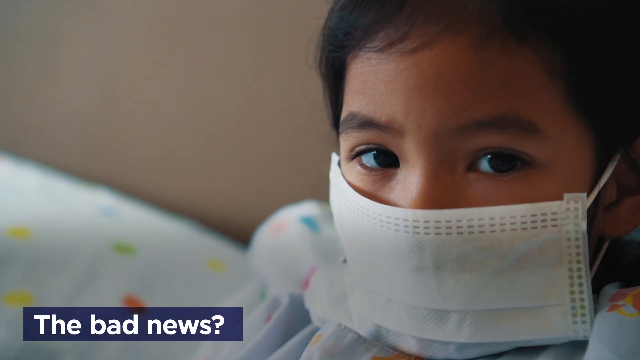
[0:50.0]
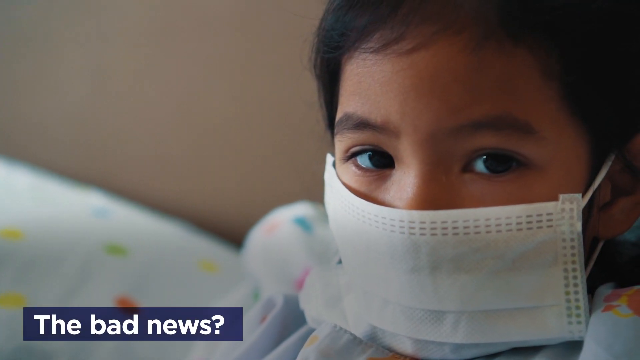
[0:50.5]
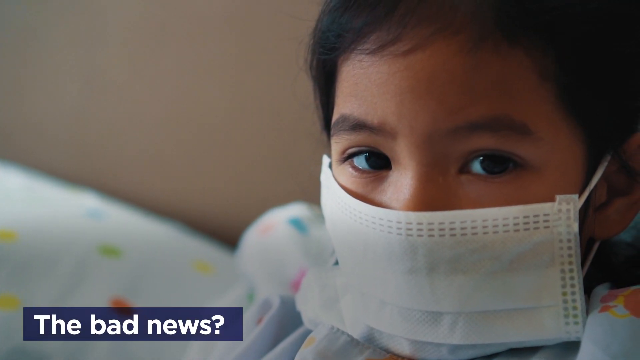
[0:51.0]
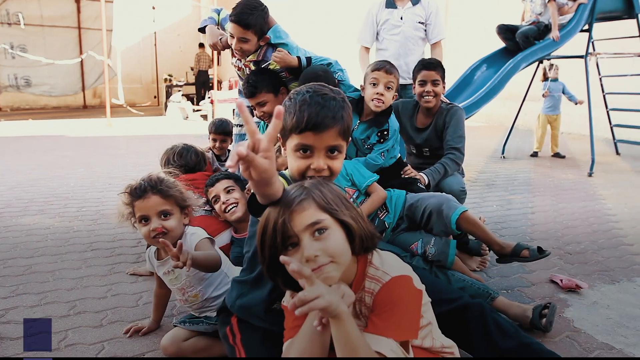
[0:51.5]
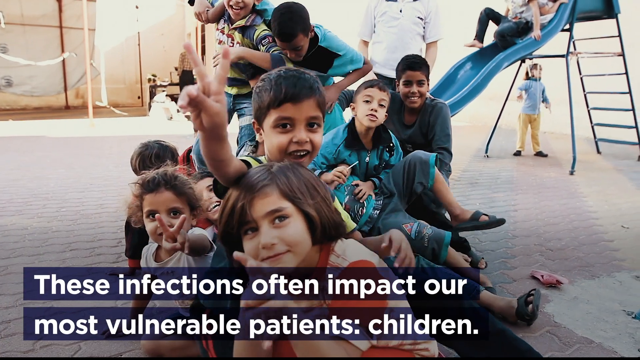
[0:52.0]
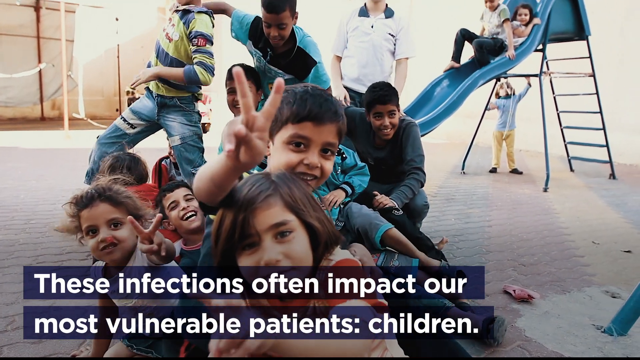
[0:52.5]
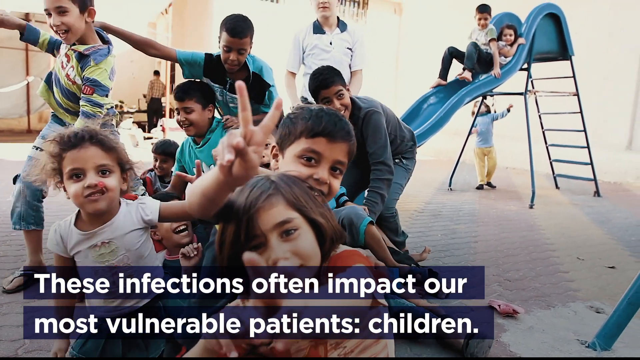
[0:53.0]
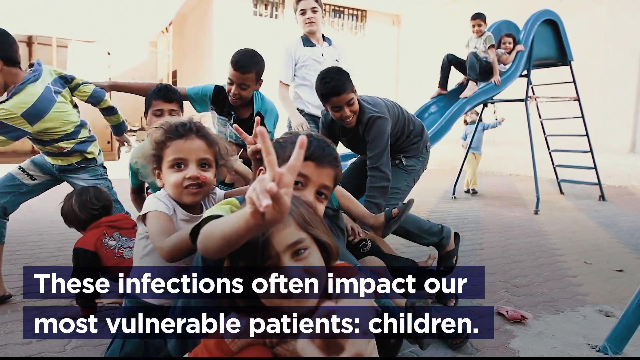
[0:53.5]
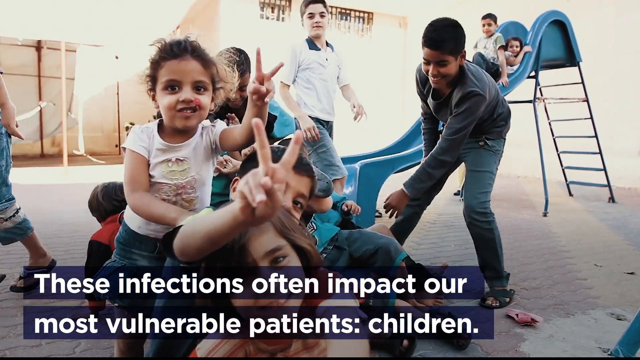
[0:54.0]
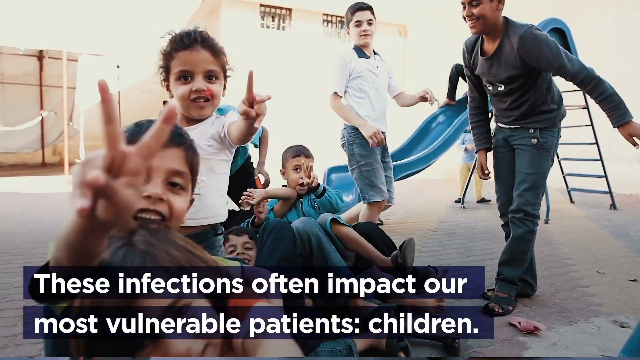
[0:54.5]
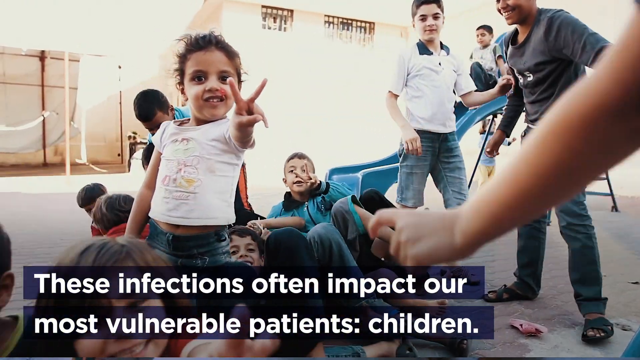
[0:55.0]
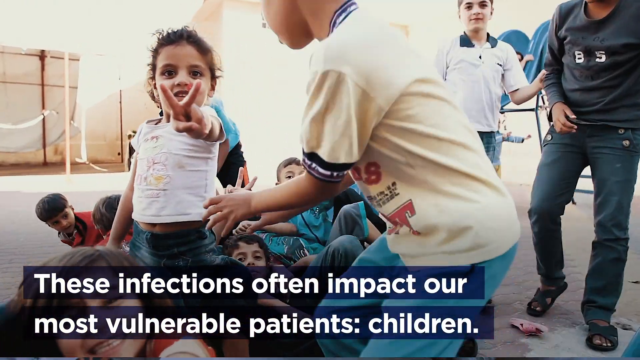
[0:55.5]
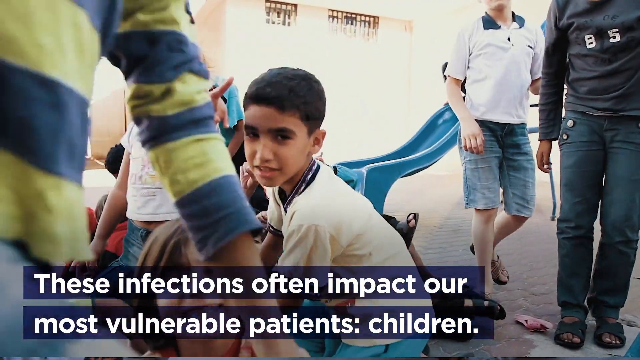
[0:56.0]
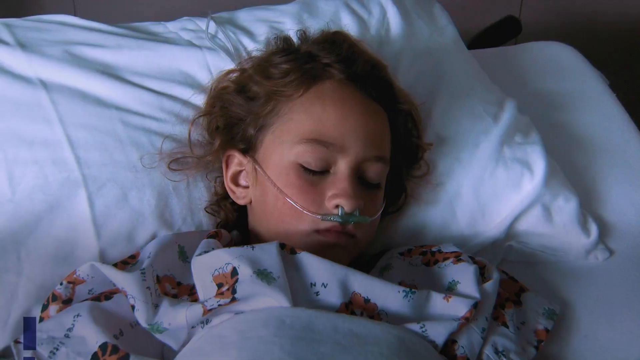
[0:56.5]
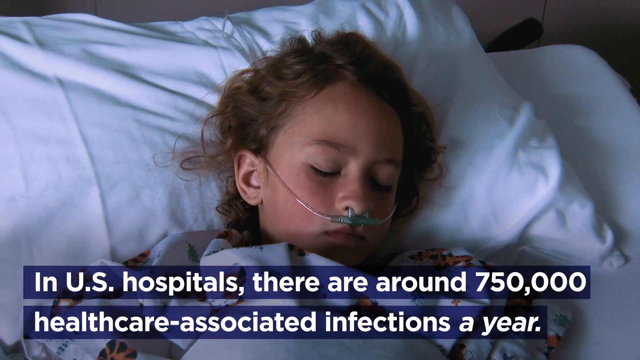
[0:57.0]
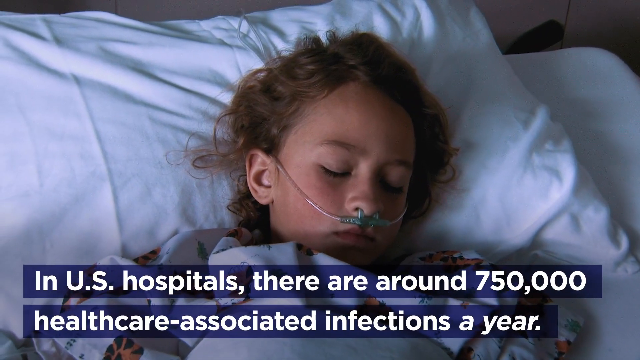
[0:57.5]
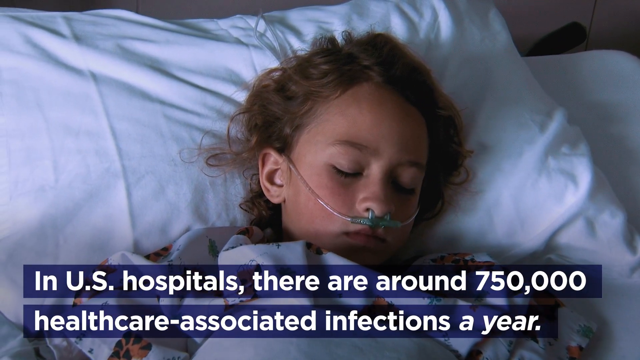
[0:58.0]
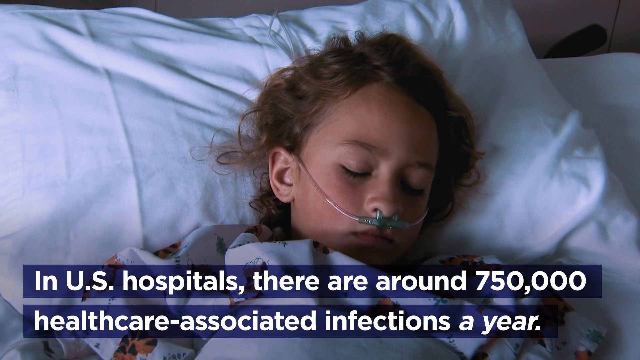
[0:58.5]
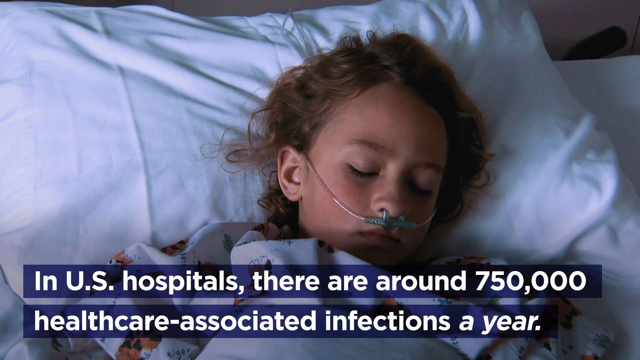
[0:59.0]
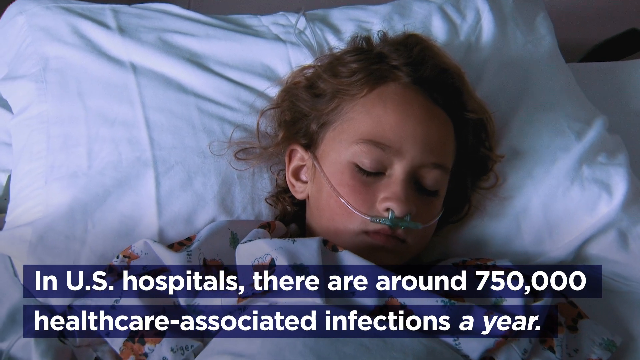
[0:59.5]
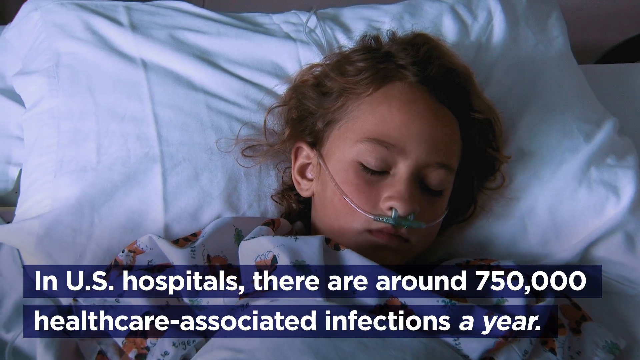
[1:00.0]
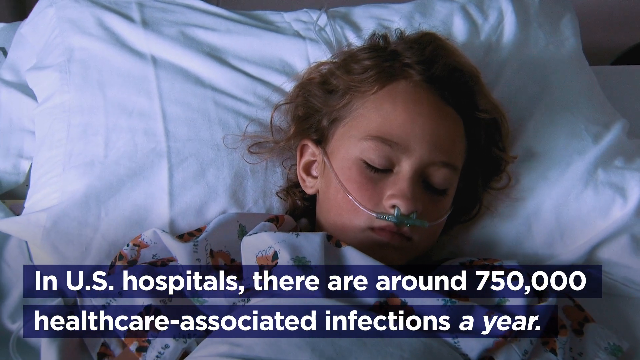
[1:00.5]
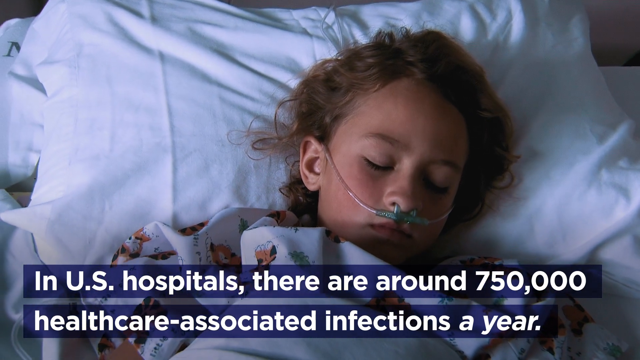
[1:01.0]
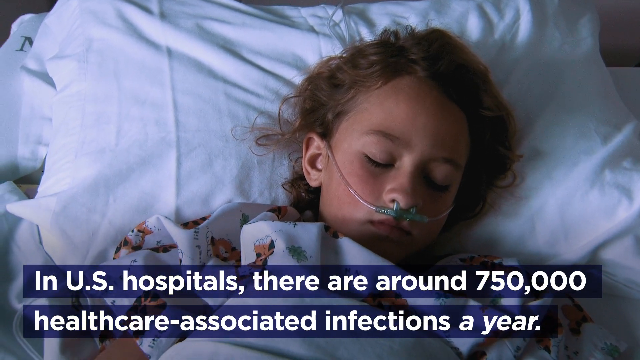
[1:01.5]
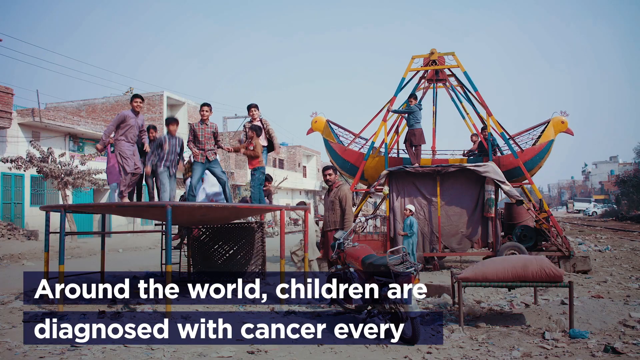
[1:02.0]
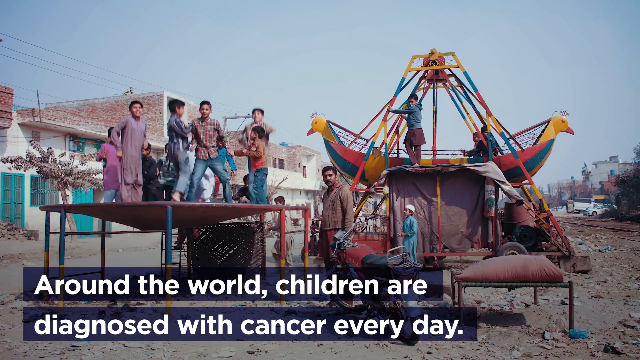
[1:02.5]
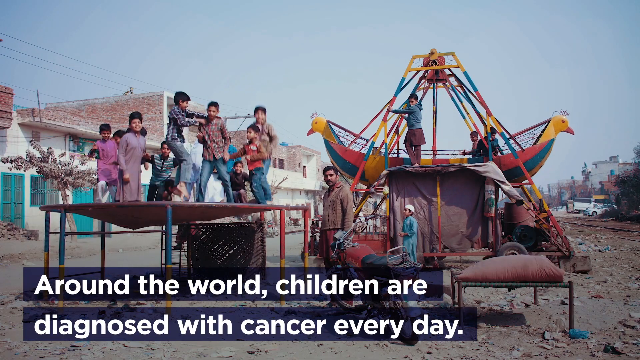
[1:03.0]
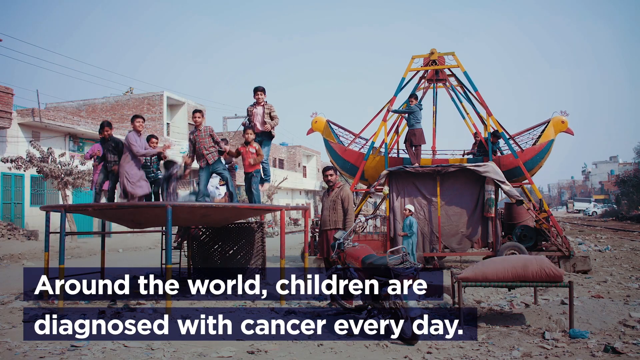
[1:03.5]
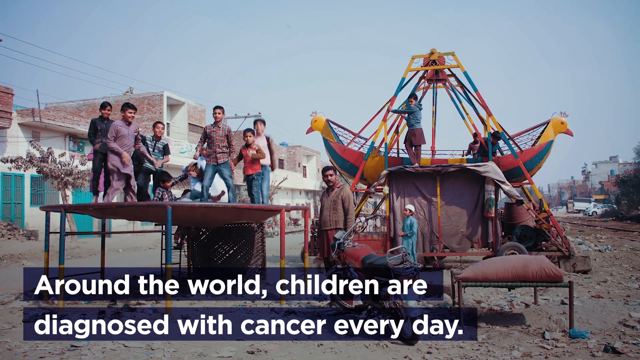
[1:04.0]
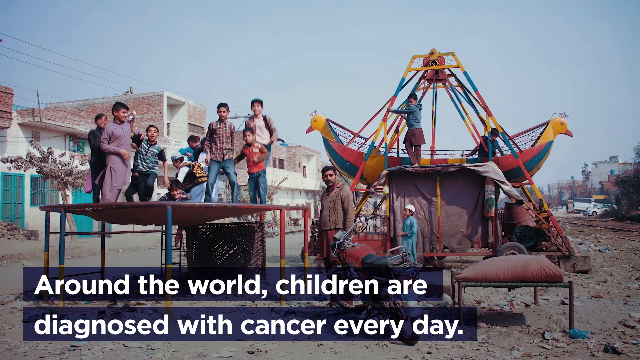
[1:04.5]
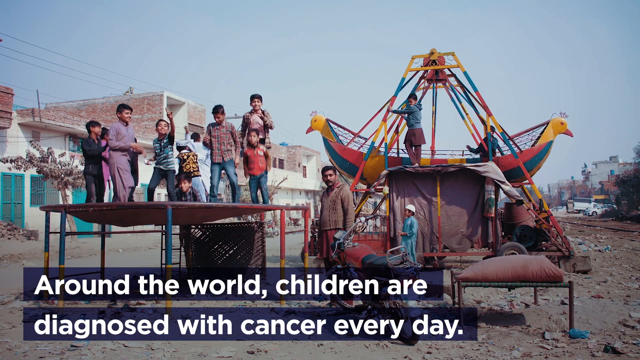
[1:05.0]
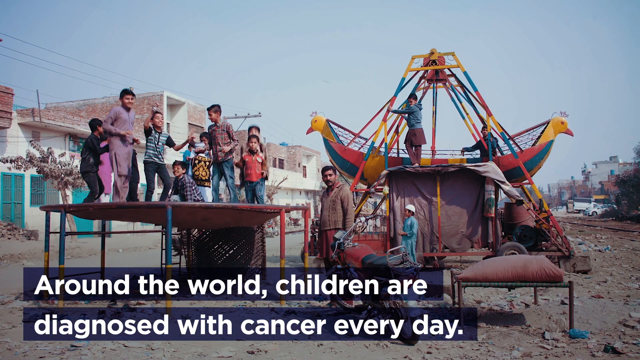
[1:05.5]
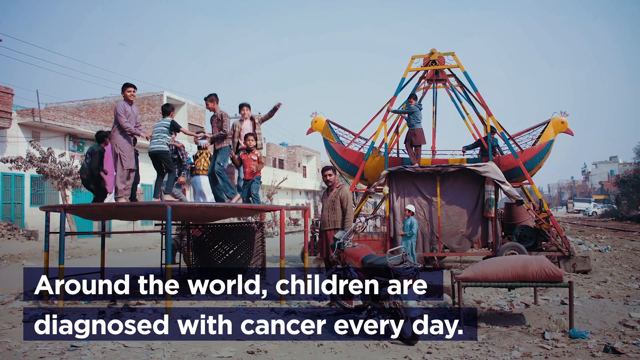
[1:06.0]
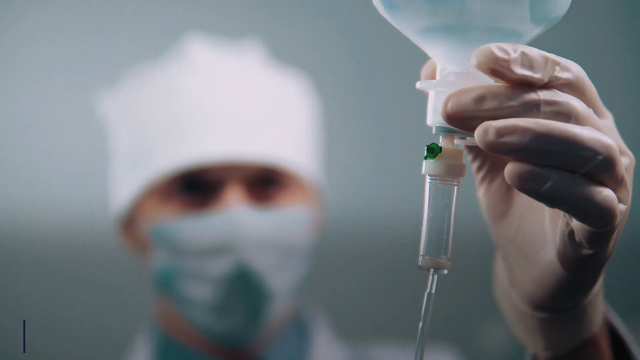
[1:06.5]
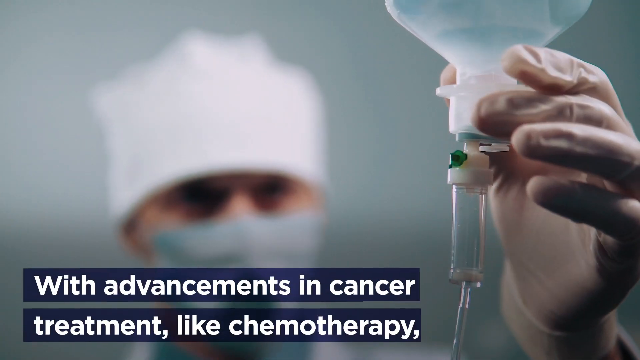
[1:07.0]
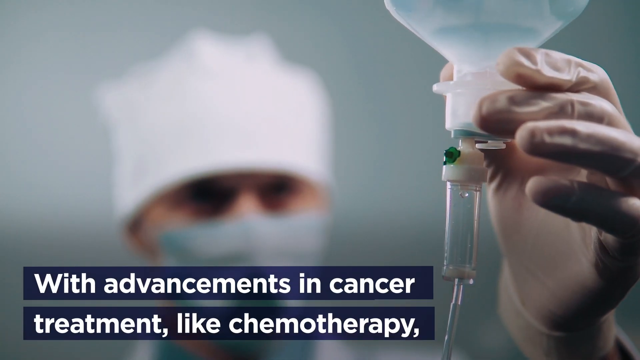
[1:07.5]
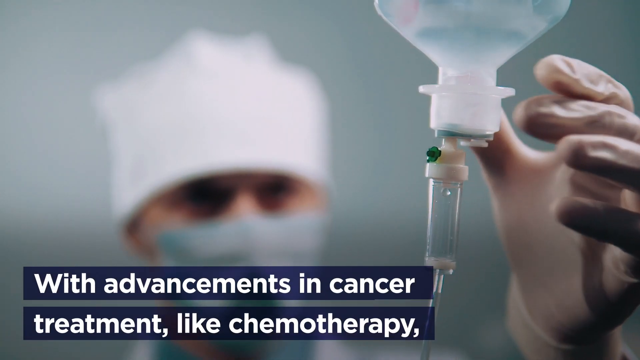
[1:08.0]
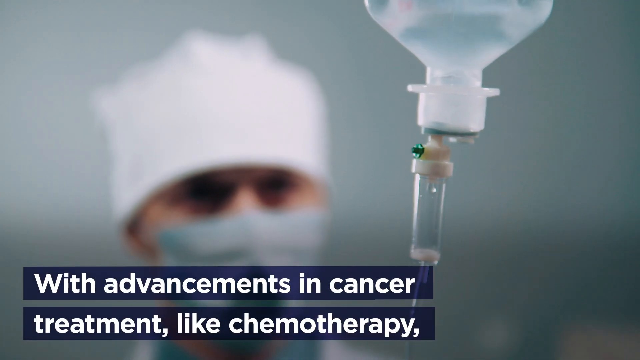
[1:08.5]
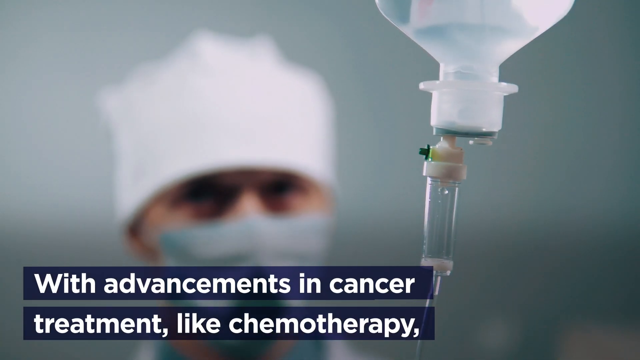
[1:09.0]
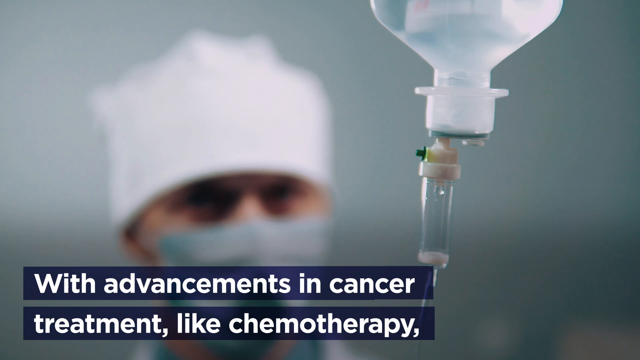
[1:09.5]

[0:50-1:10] A bunch of little kids hold up peace signs, laughing, playing and having a good time. In the back, in the top right corner, a little boy and a little girl go down a blue slide while another little girl underneath the slide seems to be walking around to go up its steps. Next, a little girl or a little boy lies in a hospital bed, and white letters at the bottom of the screen read "in US hospitals there are around 750,000 healthcare associated infections a year." The following scene shows a trampoline on the left and what looks to be a fair-style swing shaped like a boat that swings back and forth, while little kids jump up and down on the trampoline.